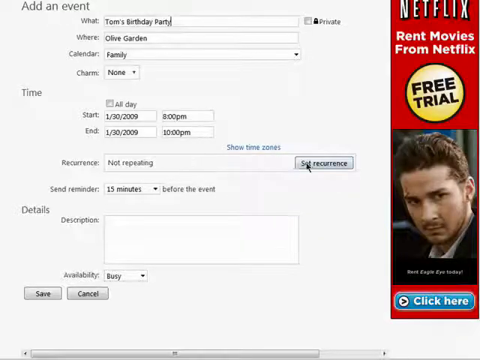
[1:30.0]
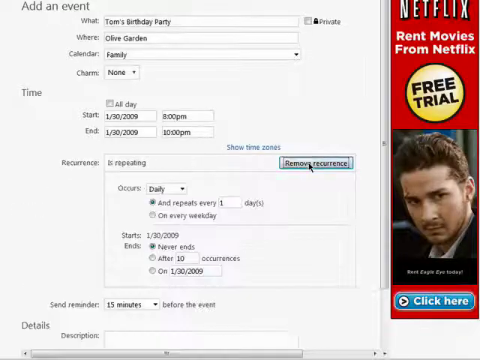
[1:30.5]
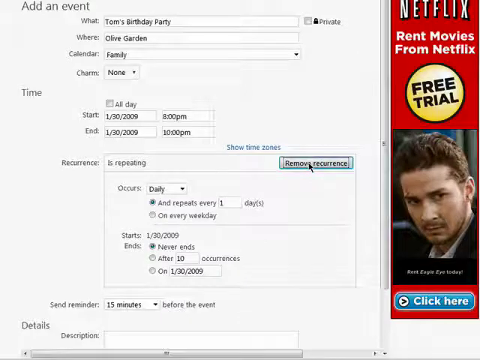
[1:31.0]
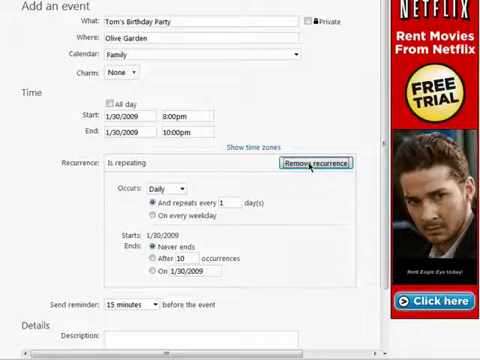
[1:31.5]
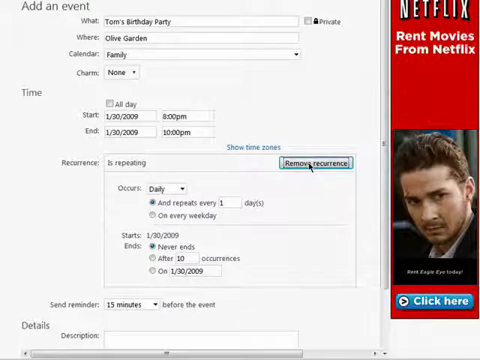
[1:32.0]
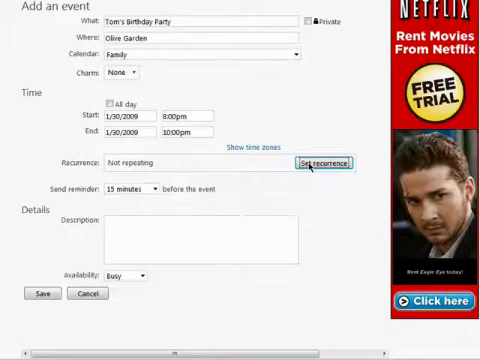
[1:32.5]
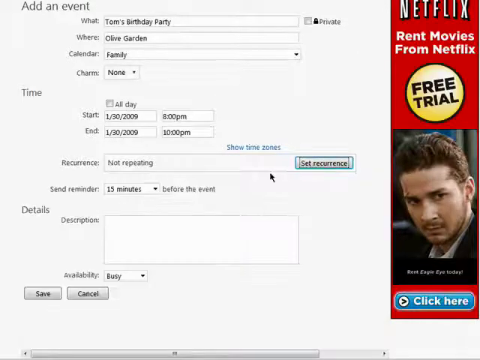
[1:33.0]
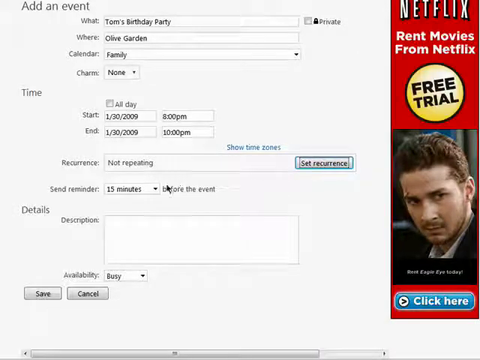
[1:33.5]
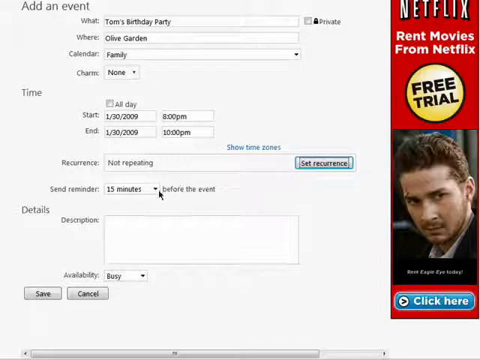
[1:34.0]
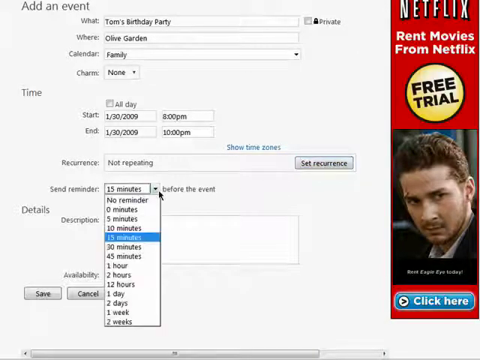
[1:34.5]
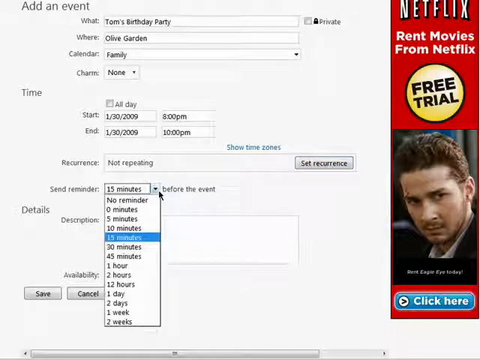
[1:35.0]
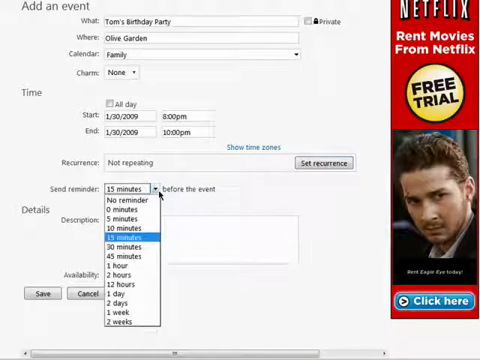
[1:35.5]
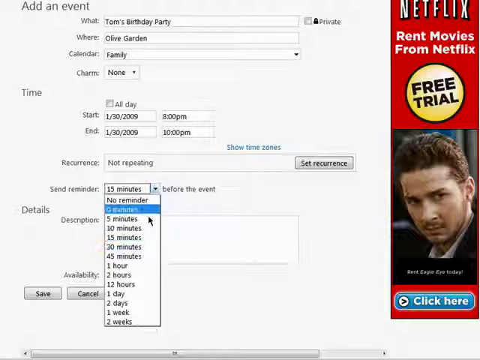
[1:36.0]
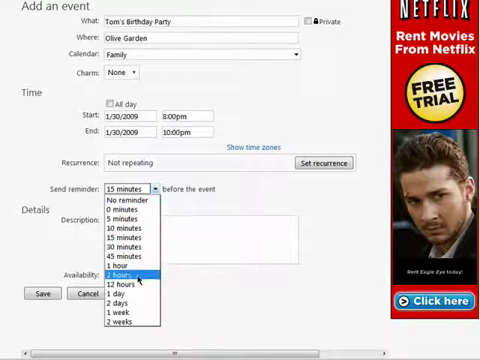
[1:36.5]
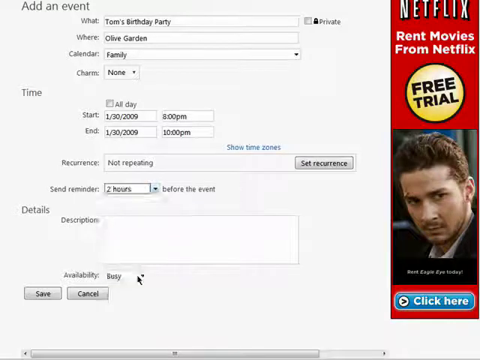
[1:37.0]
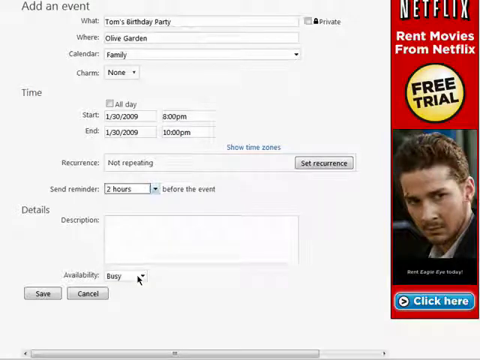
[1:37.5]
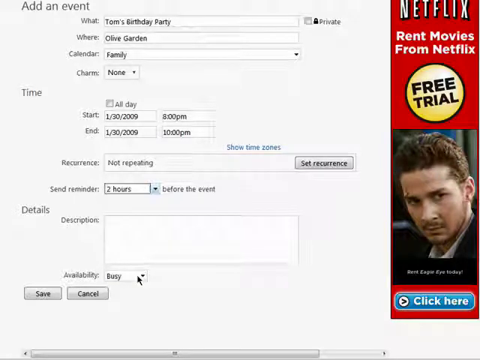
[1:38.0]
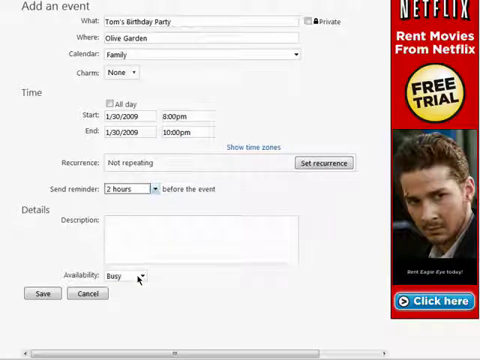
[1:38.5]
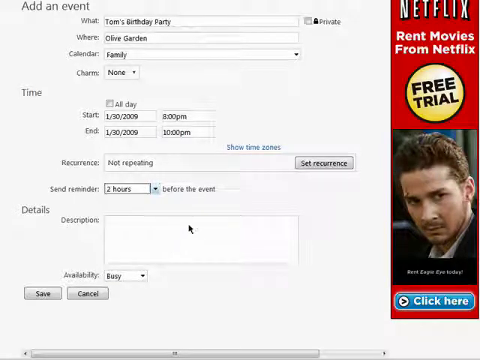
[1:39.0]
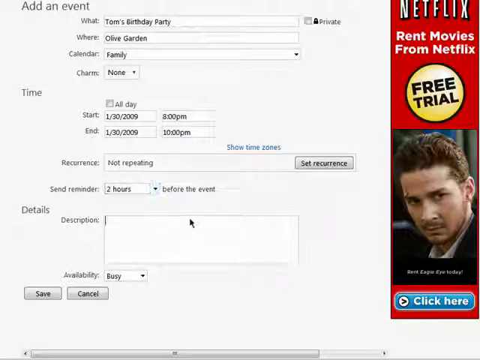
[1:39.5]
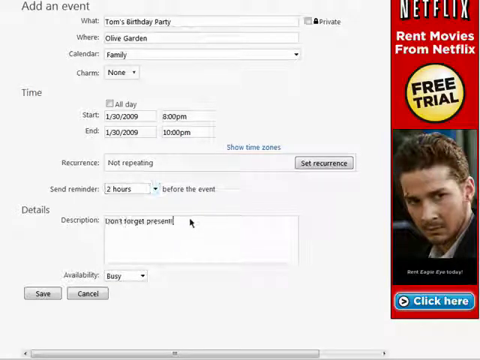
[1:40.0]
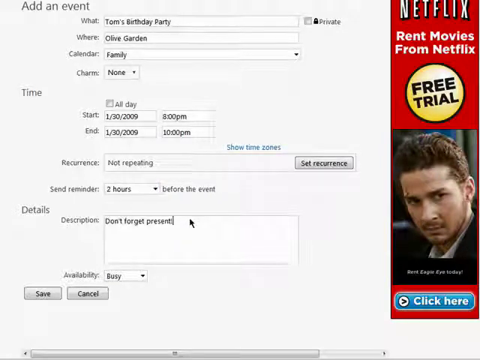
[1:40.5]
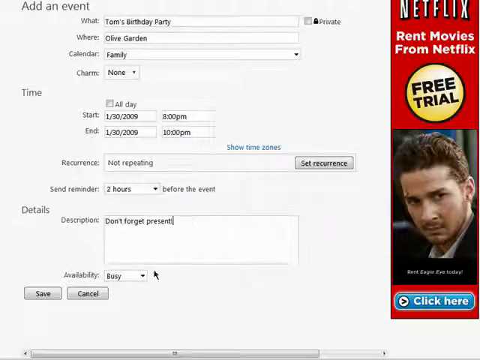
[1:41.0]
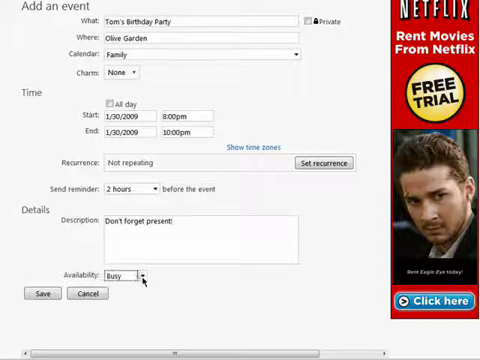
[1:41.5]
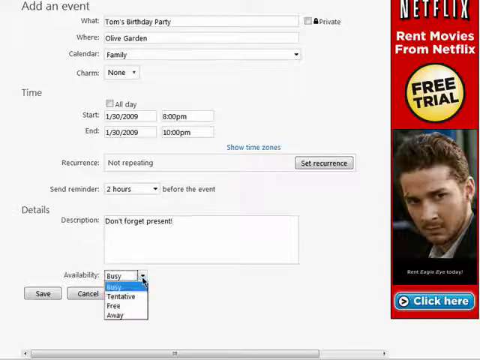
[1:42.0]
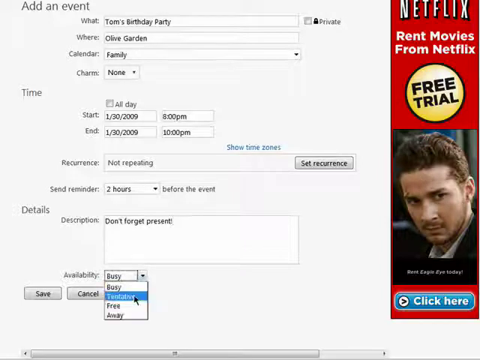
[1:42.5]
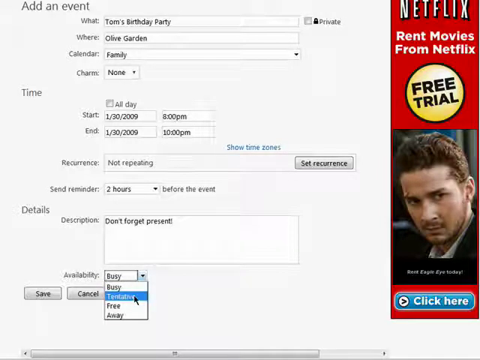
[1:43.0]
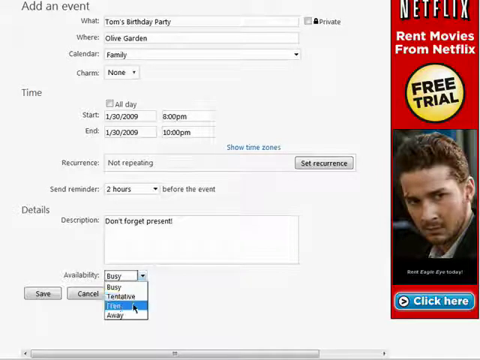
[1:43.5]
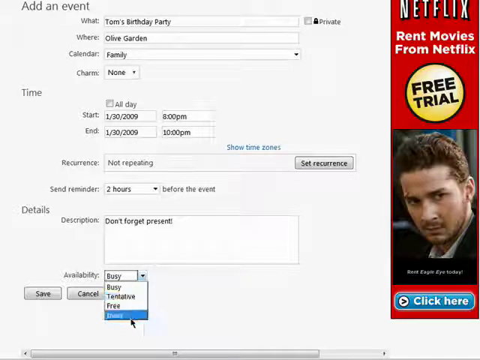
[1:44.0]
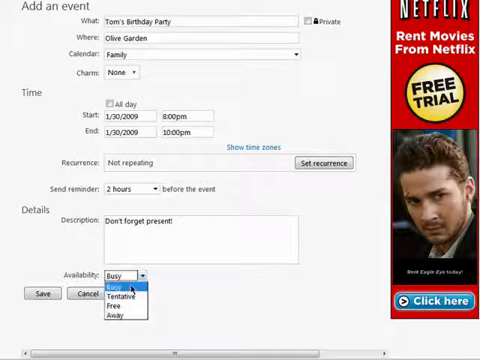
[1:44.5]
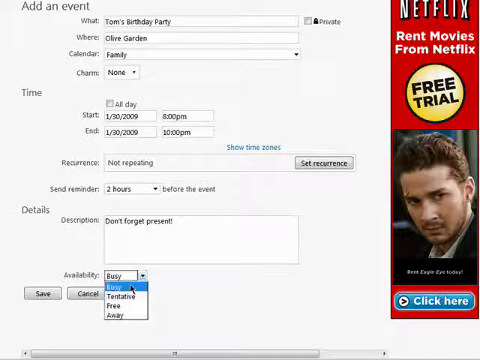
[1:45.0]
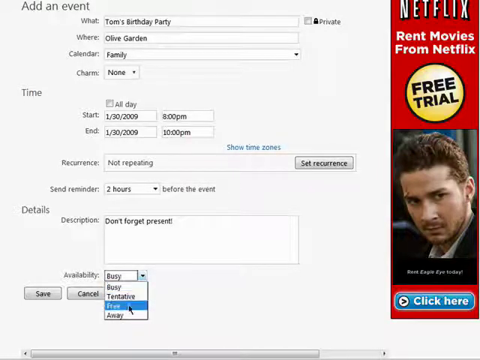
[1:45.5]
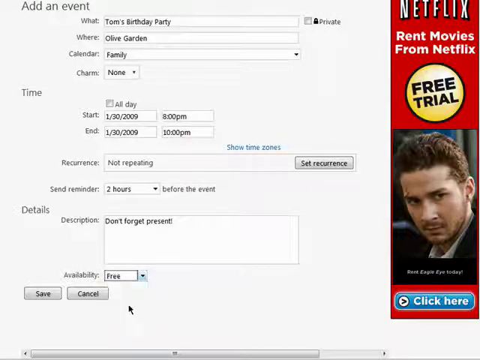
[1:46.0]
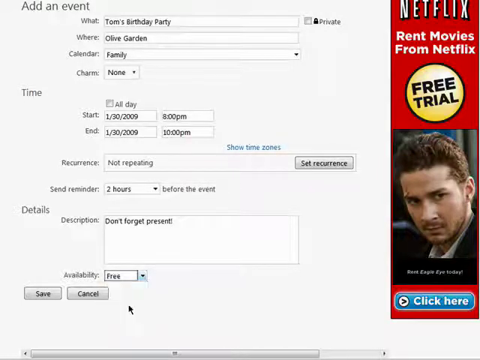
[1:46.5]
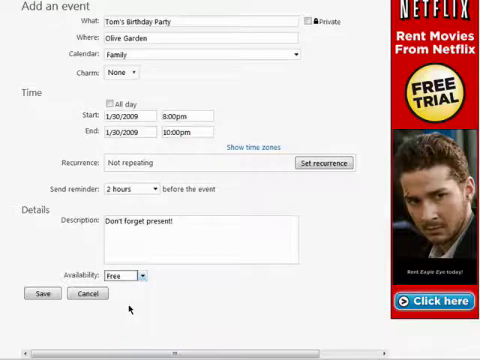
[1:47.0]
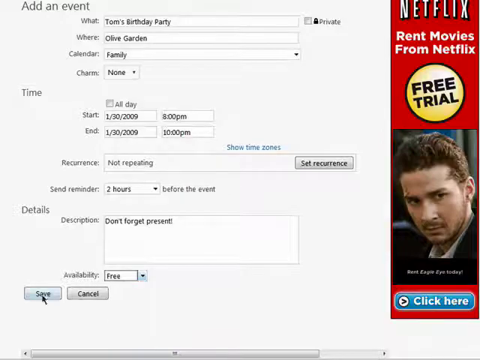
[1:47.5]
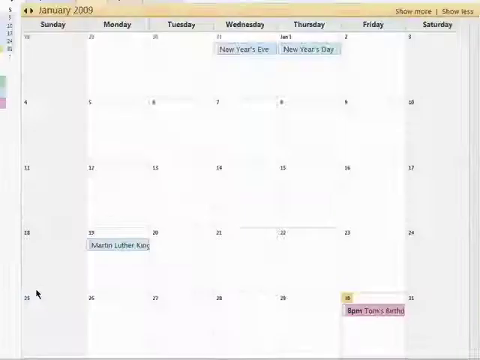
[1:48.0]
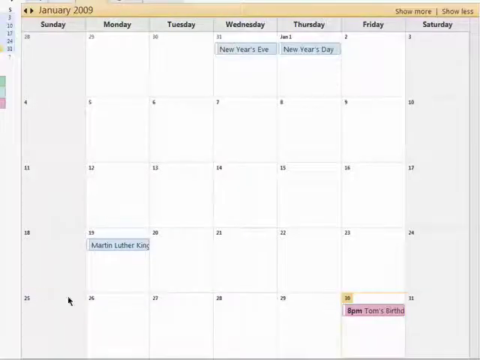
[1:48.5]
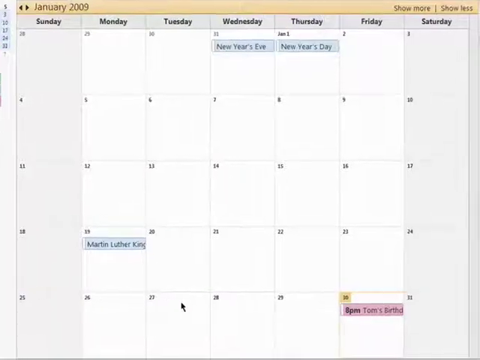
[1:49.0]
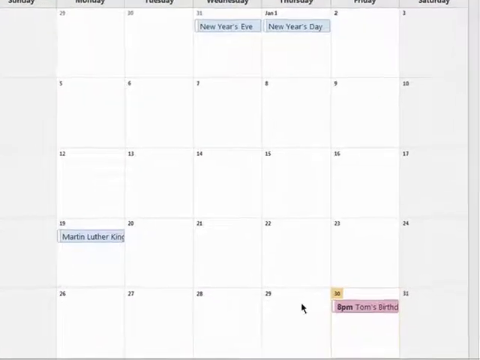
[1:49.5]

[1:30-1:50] A computer screen shows a calendar application with a detailed pop-up window for adding an event. The window shows an event for Tom's birthday party at Olive Garden, stored in the family calendar, taking place on the 30th of January 2009, starting at 8 and finishing at 10 p.m. The user adjusts the reminder, using a drop-down menu to select two hours before the event. The cursor moves down to the details description box, where they add the text reminder "don't forget present". Moving further down, they select free from the availability drop-down menu and then press the save button. The view changes to the wider calendar view showing each day in January 2009, and the camera zooms in on the 30th of January to show a new event added for Tom's birthday party.